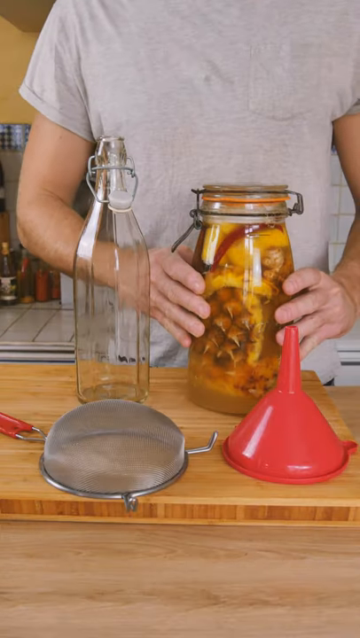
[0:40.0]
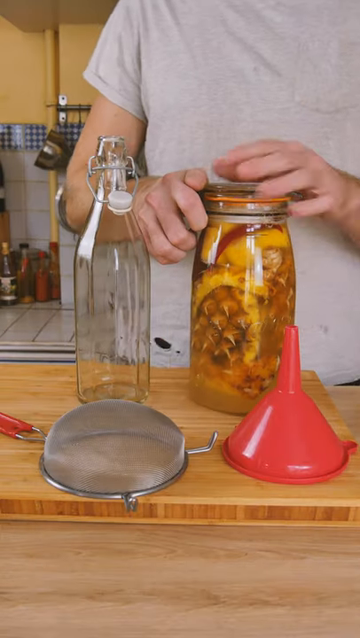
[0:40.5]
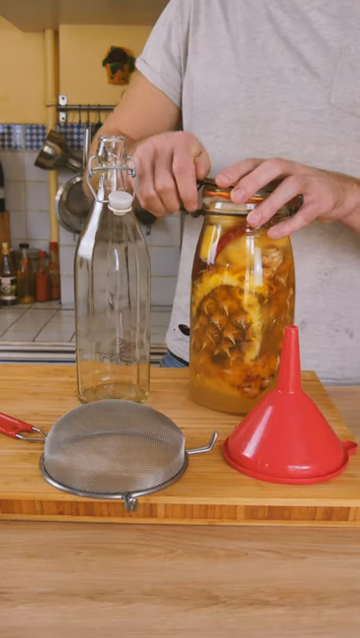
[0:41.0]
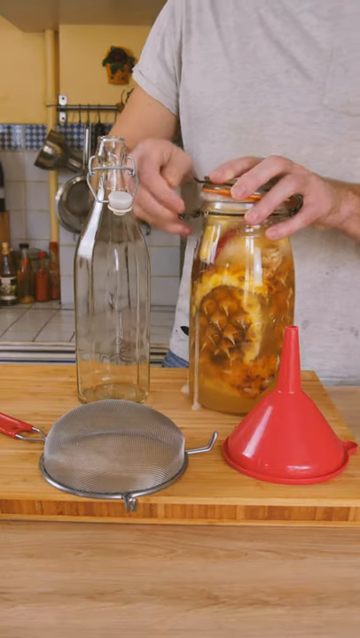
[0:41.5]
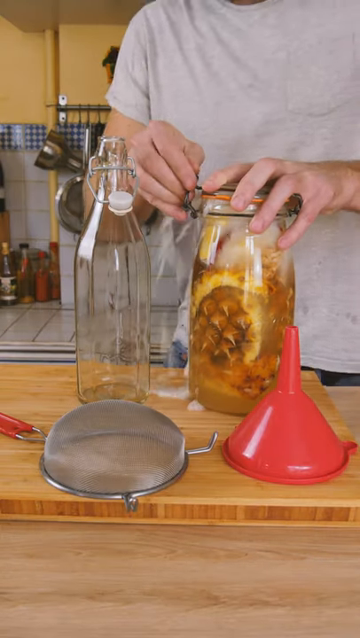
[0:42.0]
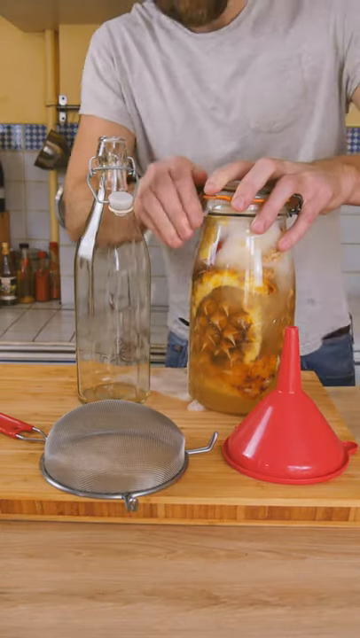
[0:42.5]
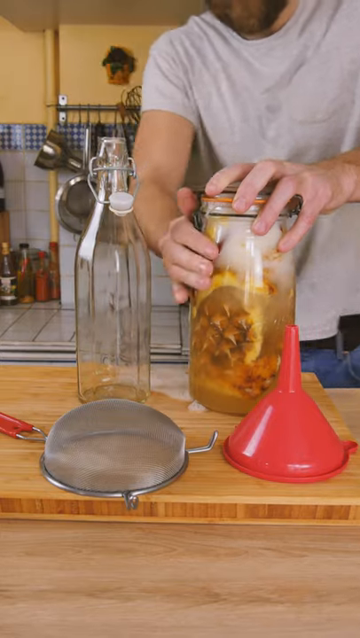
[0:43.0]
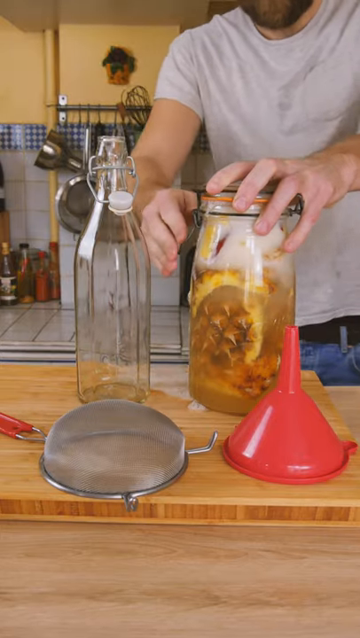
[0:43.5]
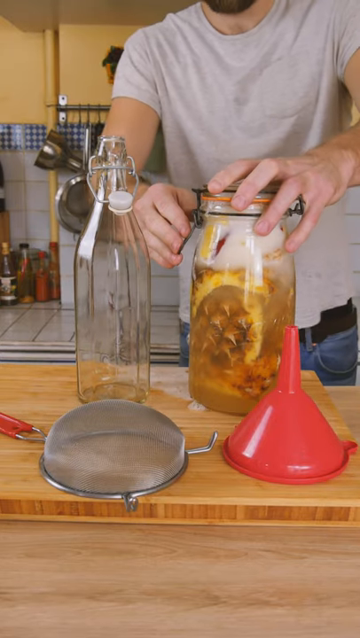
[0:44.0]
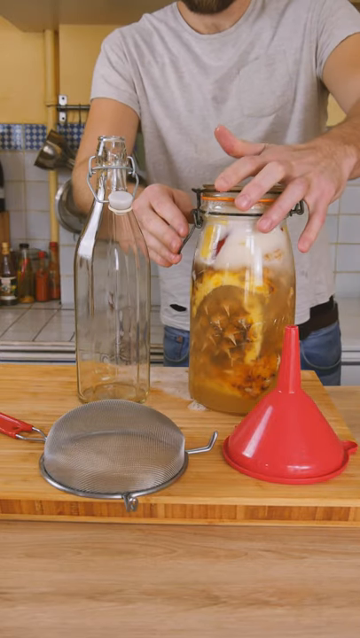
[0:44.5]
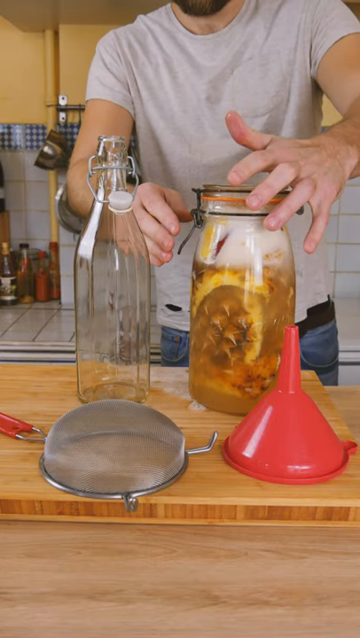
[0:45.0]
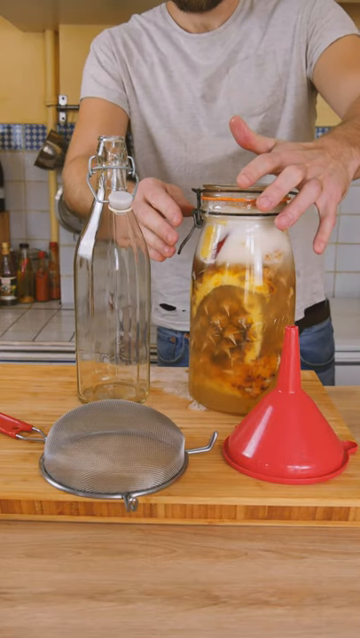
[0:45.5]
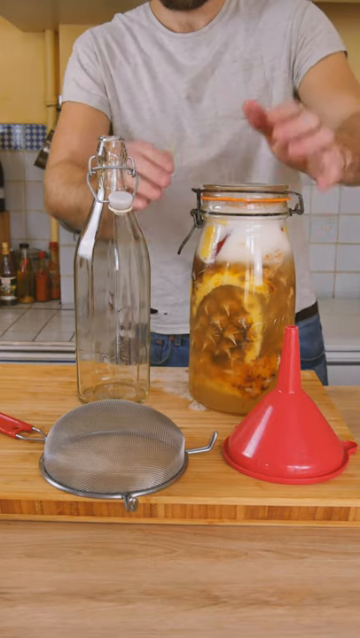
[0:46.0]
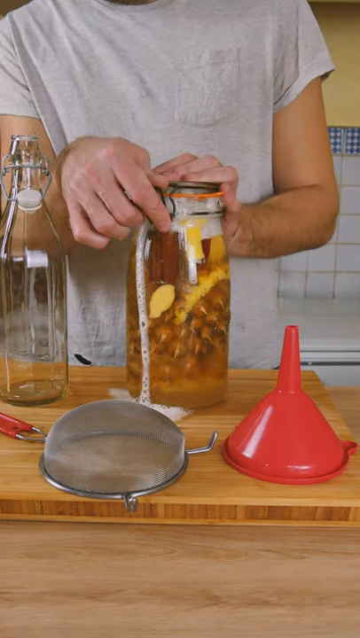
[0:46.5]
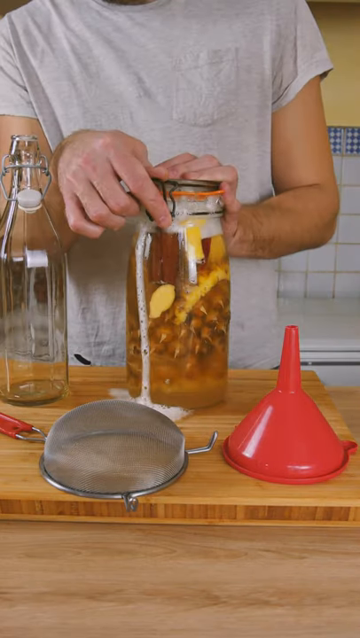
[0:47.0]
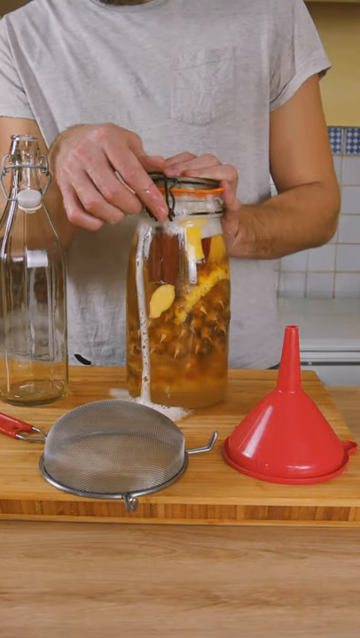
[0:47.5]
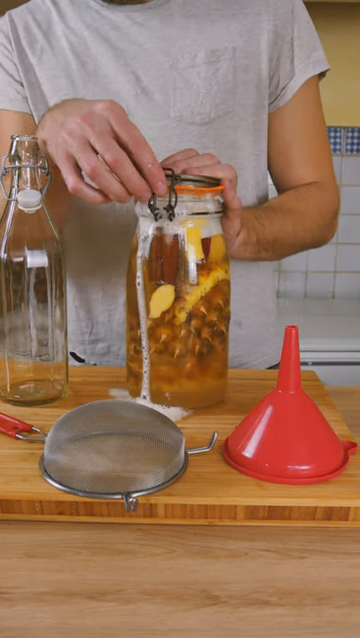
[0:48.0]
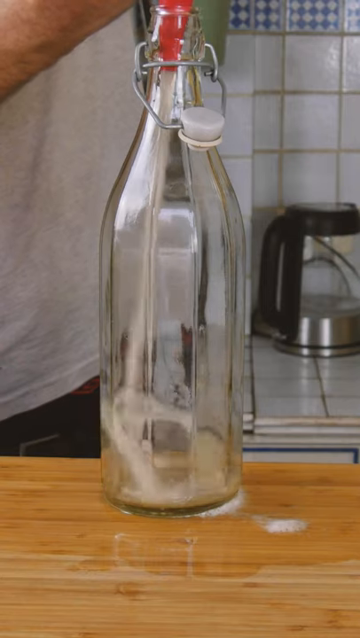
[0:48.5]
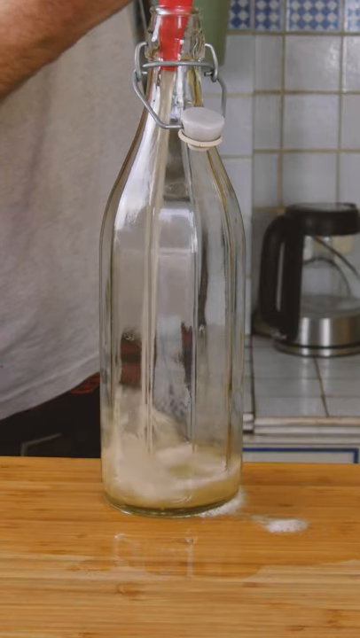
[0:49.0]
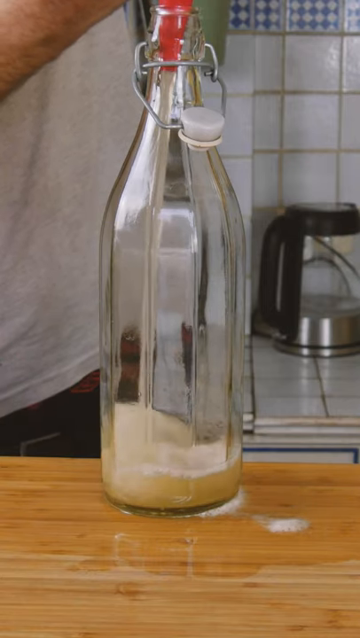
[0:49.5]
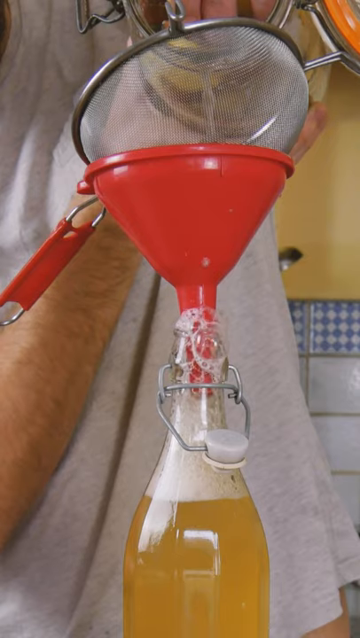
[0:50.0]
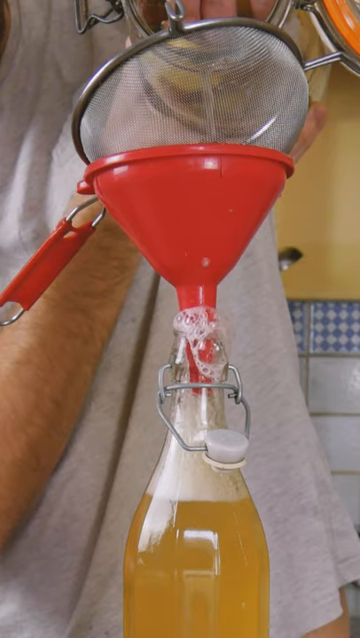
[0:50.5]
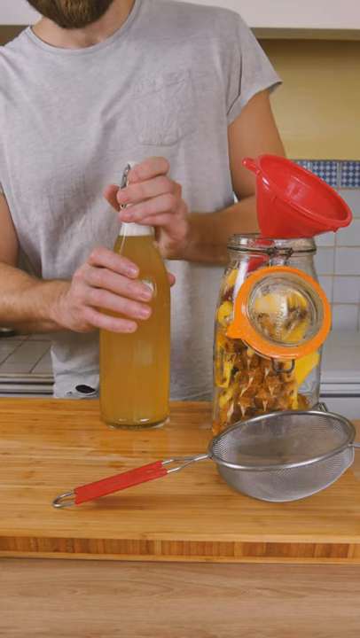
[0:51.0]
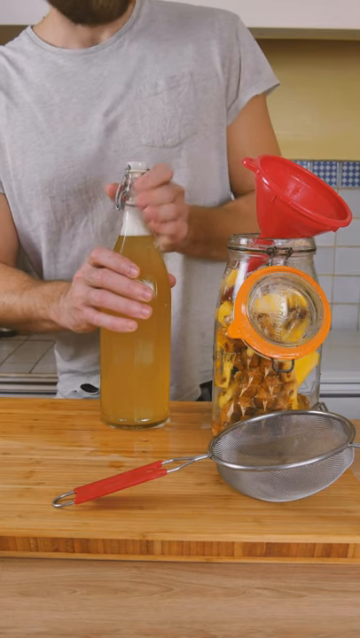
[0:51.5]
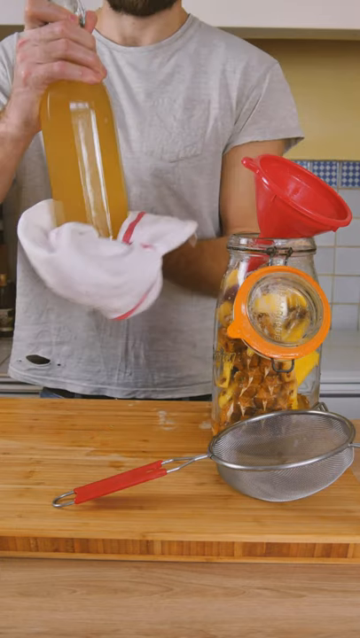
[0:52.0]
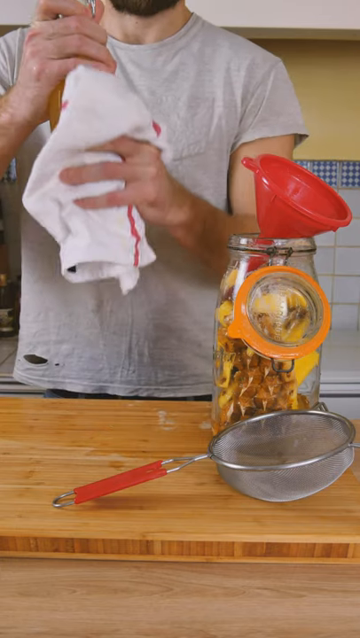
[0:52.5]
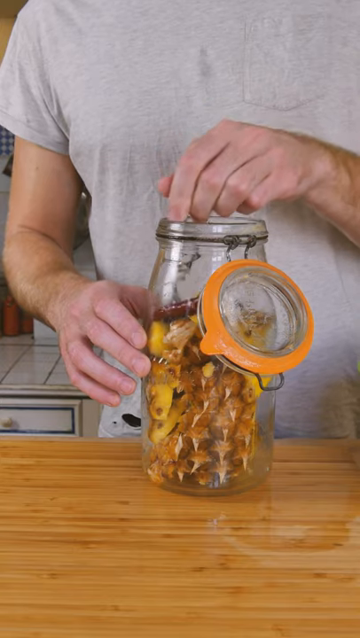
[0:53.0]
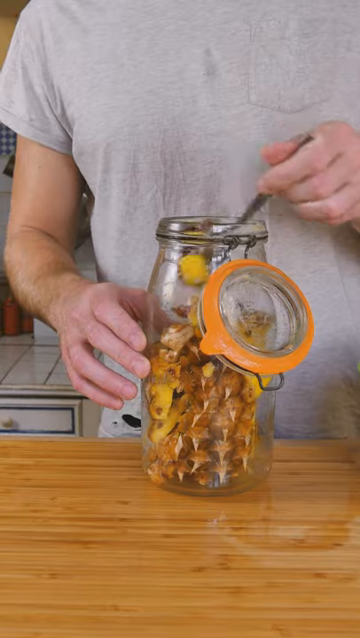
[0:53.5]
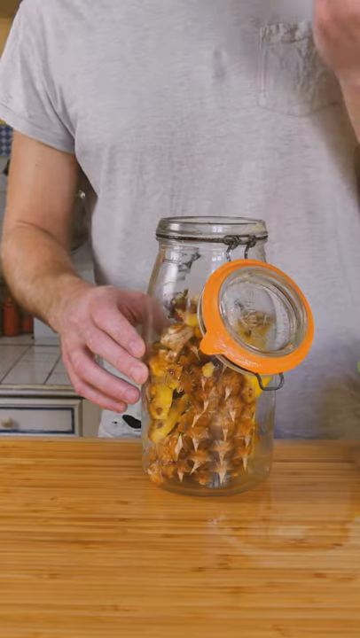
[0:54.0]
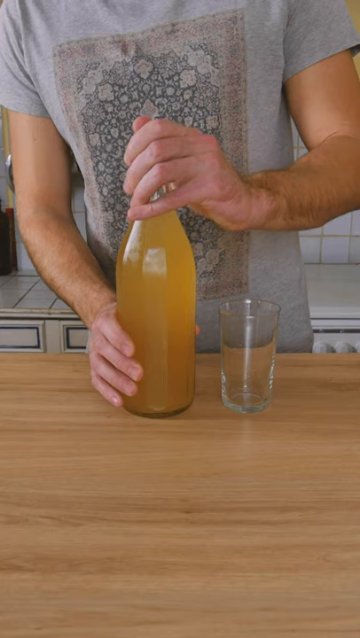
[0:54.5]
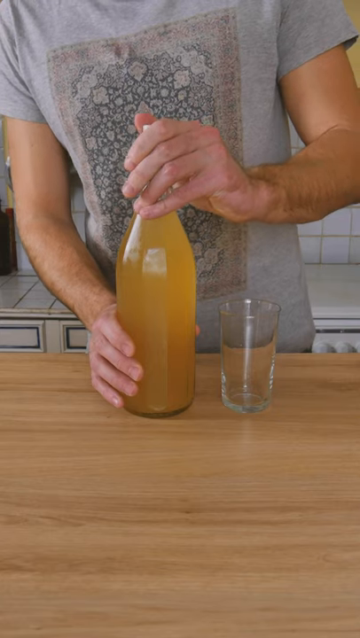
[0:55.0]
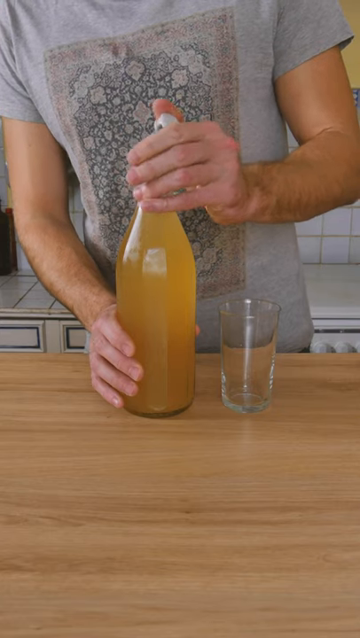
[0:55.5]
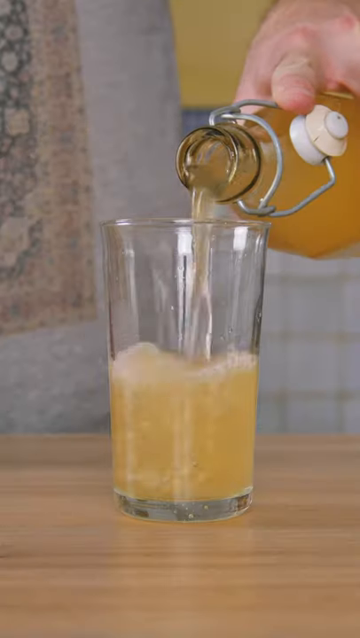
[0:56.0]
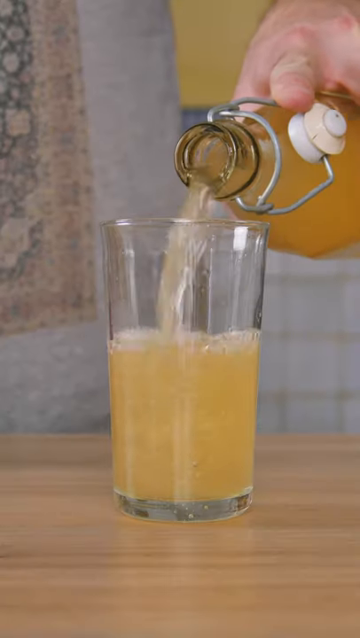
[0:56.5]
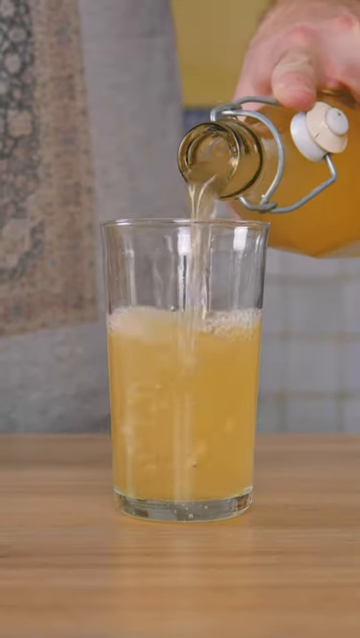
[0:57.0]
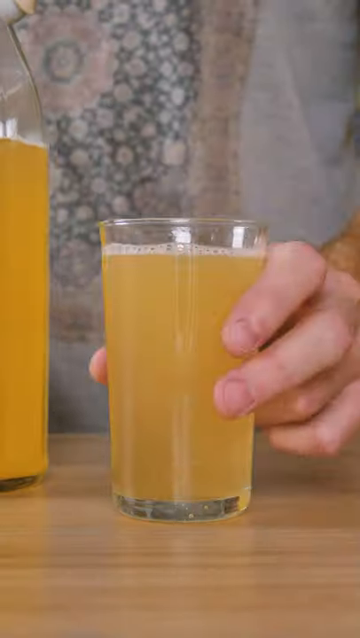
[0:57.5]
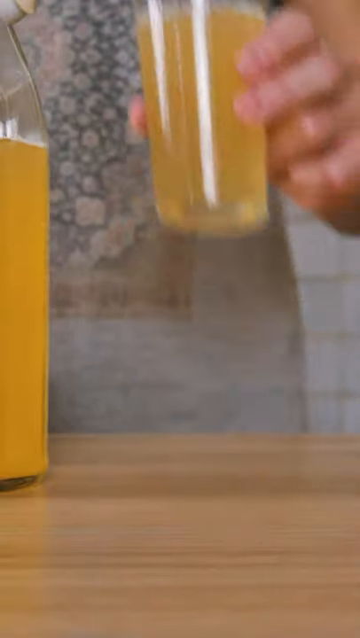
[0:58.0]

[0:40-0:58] The chef opens the jar, which is very foamy; some of the liquid overflows as they try to open it, and they open the lid very carefully. They funnel all of the liquid into a glass bottle, with the bottle at the bottom and a red funnel and a strainer at the top. The liquid is a kind of musky, dark yellow color. They wipe the bottle clean. The cook uses a fork to pick out a piece of the pineapple in the jar and apparently eats it. Then they pour the yellow liquid from the bottle into a glass and drink it. It seems to be some kind of pineapple beverage that was stored over time, possibly a pineapple kombucha or pineapple beer.